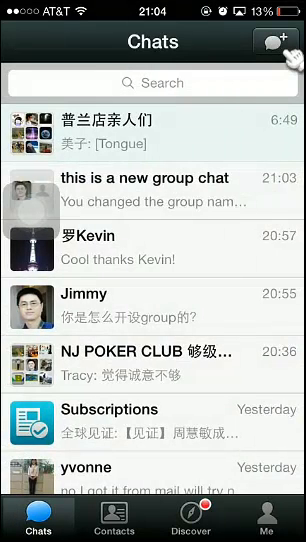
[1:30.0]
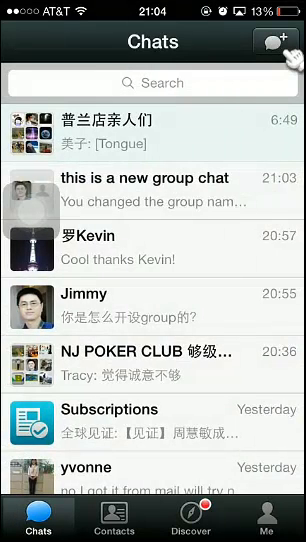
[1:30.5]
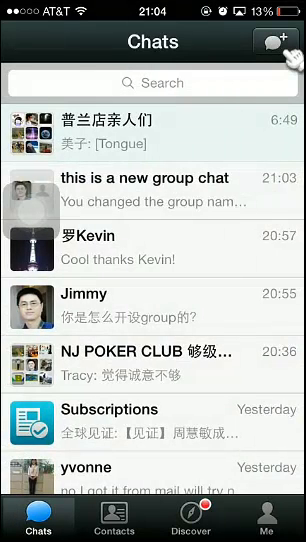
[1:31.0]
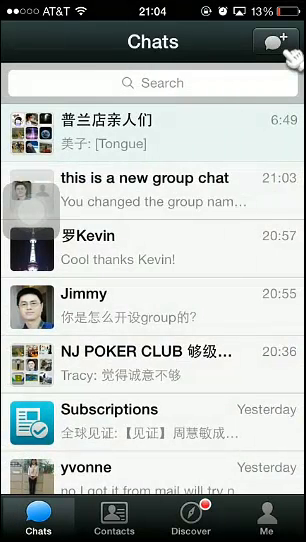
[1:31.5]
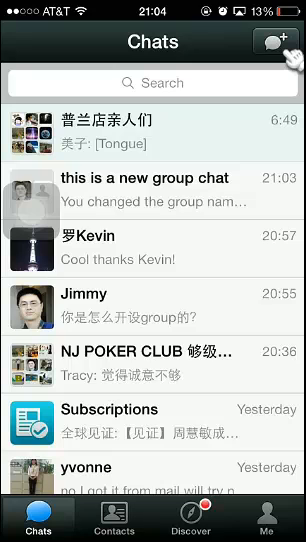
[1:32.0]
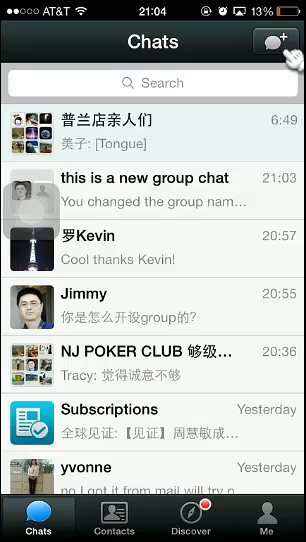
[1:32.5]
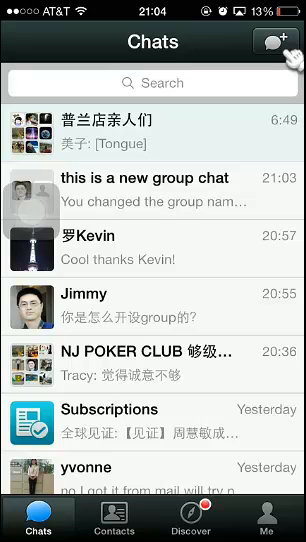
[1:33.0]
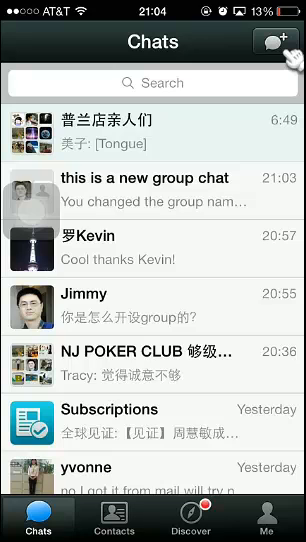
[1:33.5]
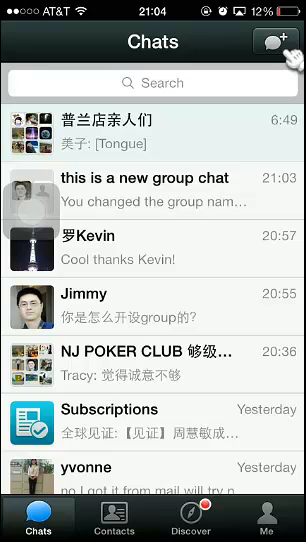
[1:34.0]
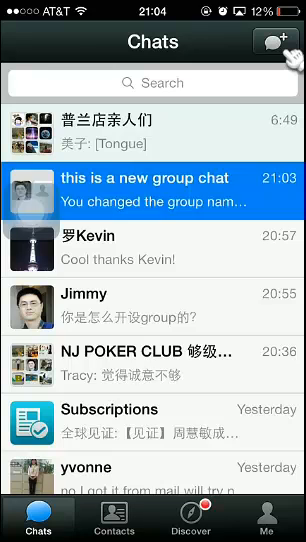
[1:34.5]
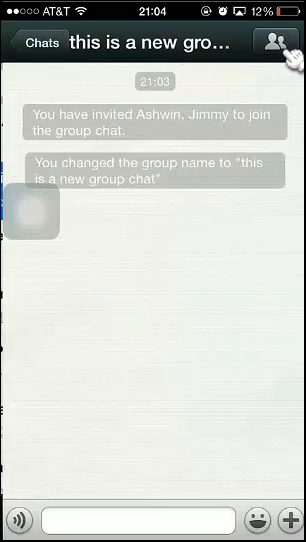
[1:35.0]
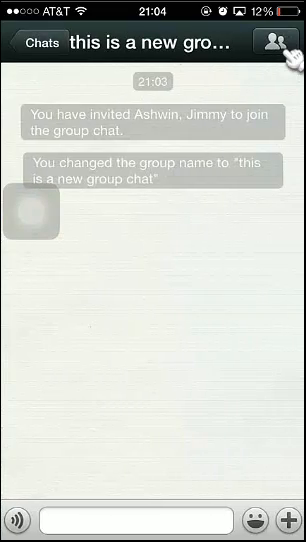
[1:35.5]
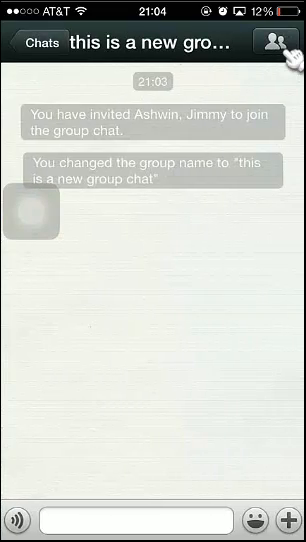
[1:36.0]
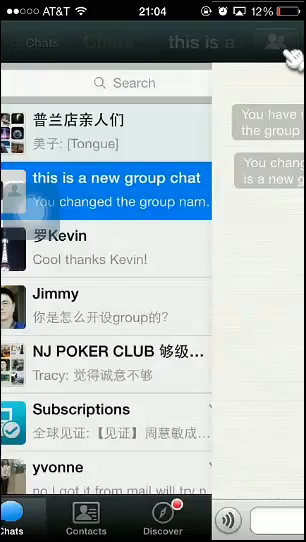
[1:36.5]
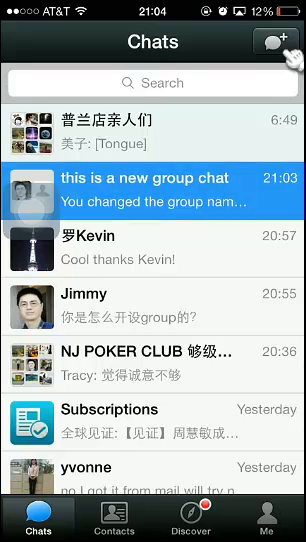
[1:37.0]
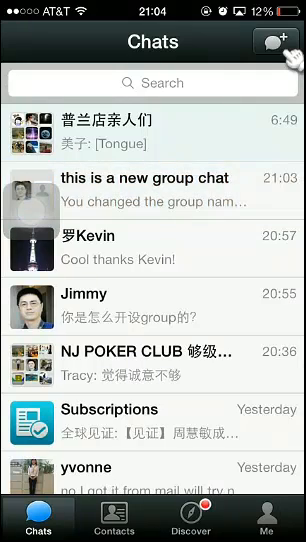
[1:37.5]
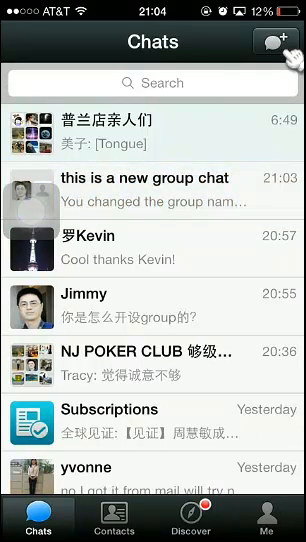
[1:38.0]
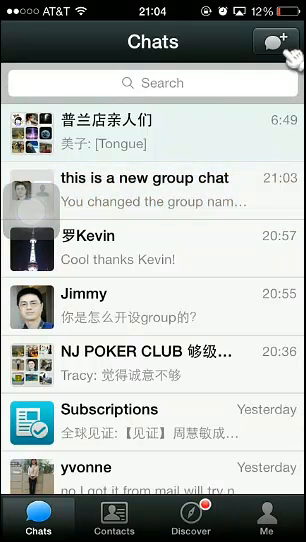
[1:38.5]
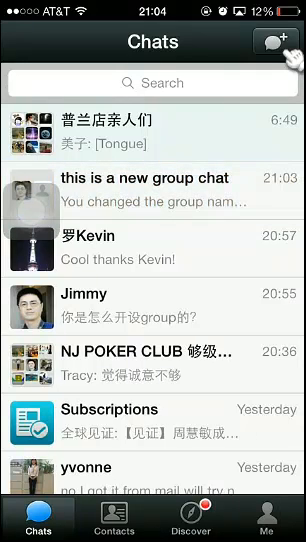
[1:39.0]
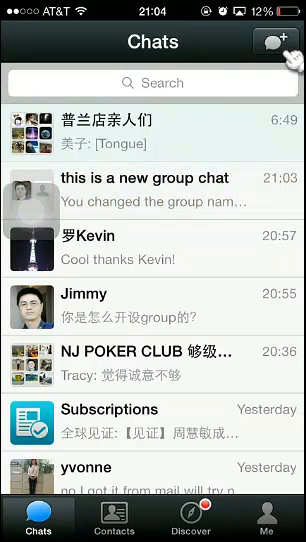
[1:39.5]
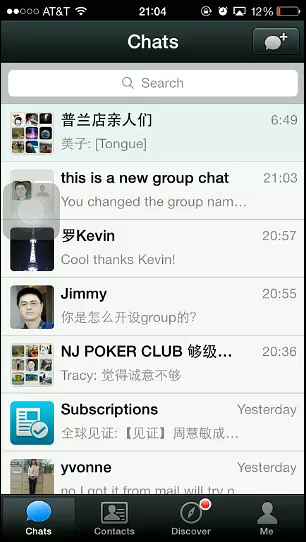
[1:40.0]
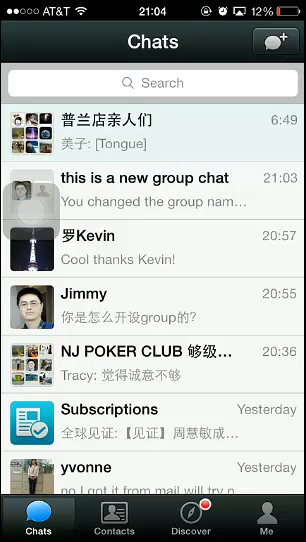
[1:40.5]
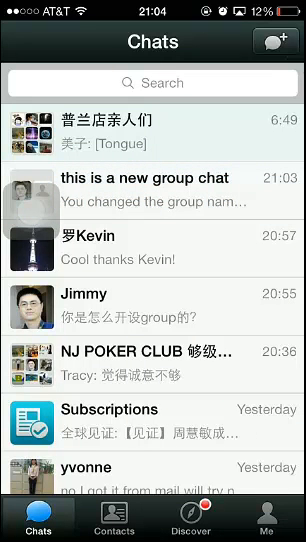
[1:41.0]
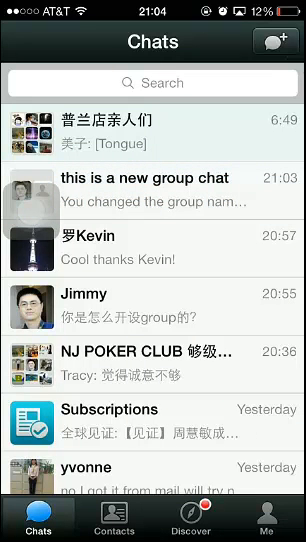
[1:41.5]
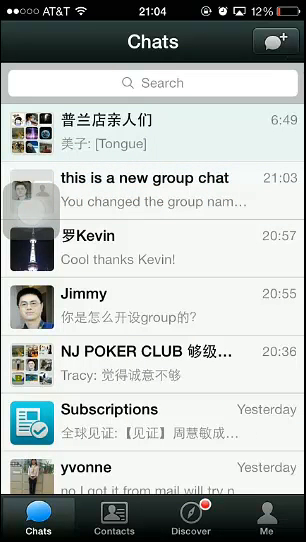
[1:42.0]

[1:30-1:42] Jason exits to the chats menu, which lists several chats. There is an add chat button at the top right and, below it, a search bar for finding a specific person. The group's name now reads "This is a new group chat". At the bottom are buttons such as Contact, Discover and Me. The battery is at 10%. The first chat is a group chat that received a message at 6:49. The new group chat shows 21:03, the chat with Kevin 20:57, and the chat with Jimmy 20:55. The NJ Poker Club group shows 20:36, with Tracy as the last person to send a text, and Jimmy can be seen in the poker club. The Subscriptions chat and the chat with Yvonne are both from yesterday, and Yvonne's message says "No, I got it from the mail."